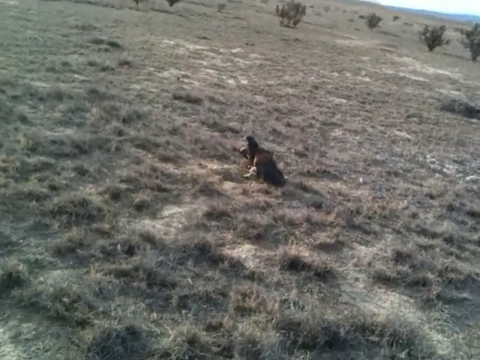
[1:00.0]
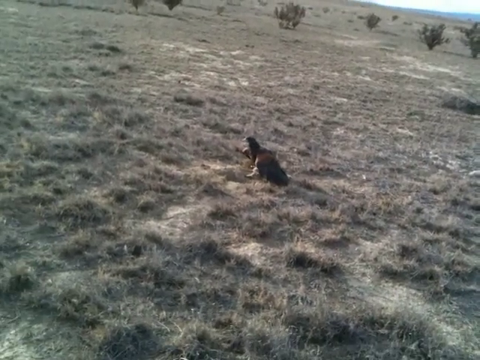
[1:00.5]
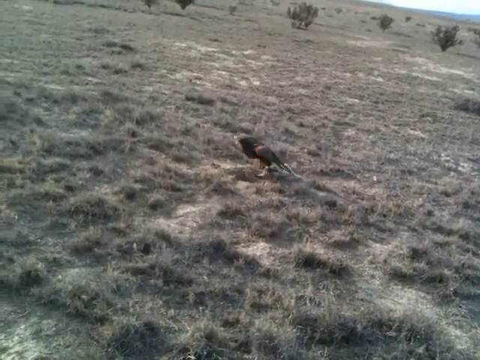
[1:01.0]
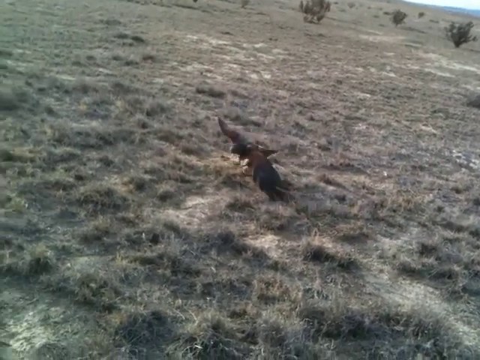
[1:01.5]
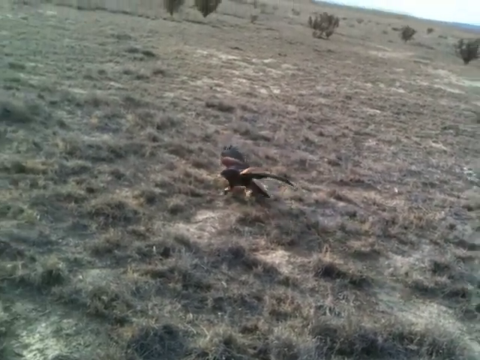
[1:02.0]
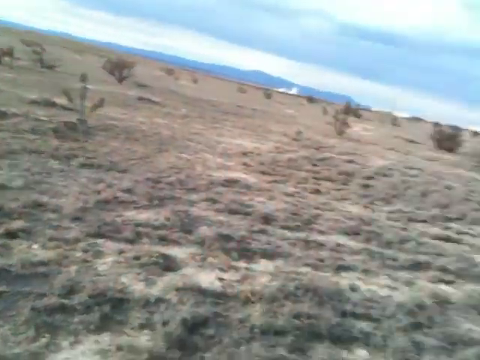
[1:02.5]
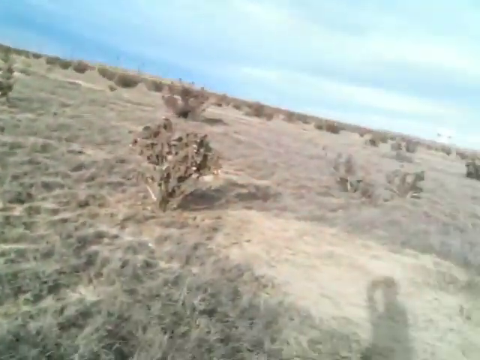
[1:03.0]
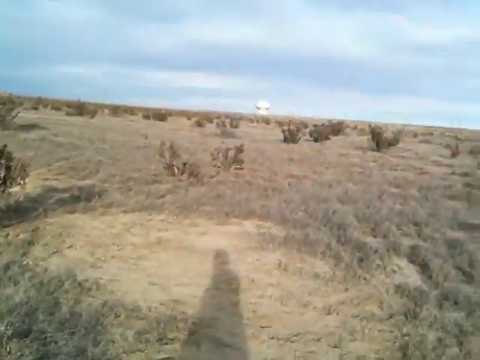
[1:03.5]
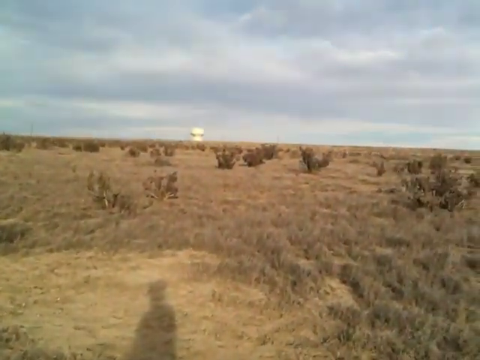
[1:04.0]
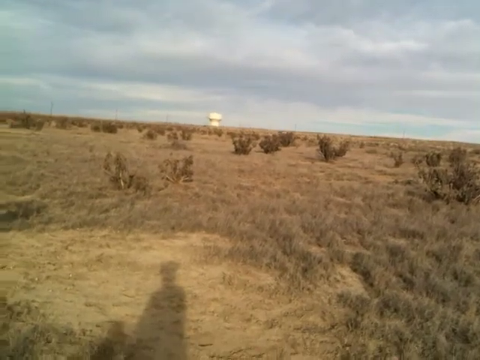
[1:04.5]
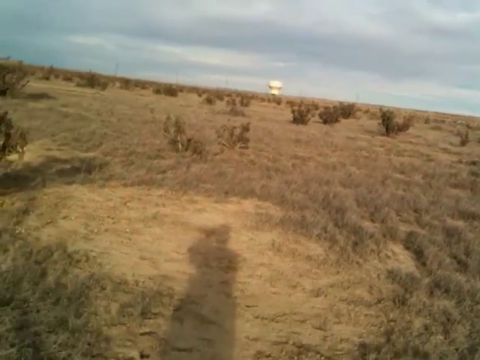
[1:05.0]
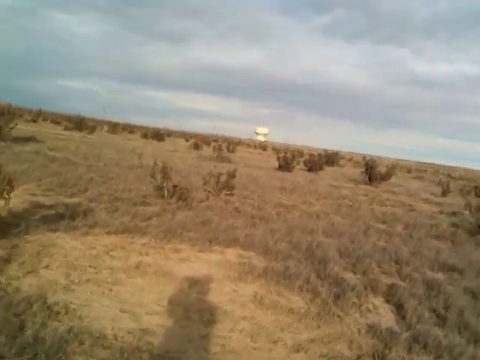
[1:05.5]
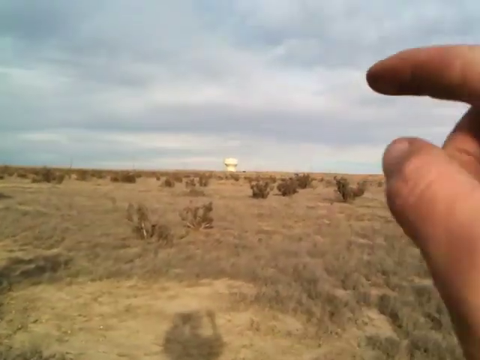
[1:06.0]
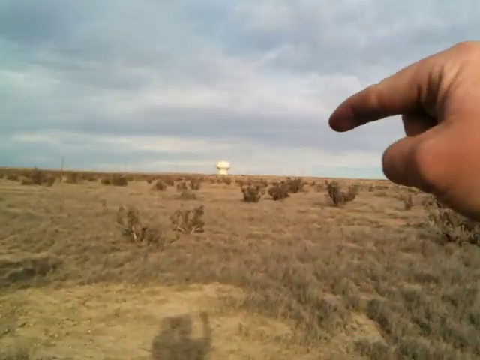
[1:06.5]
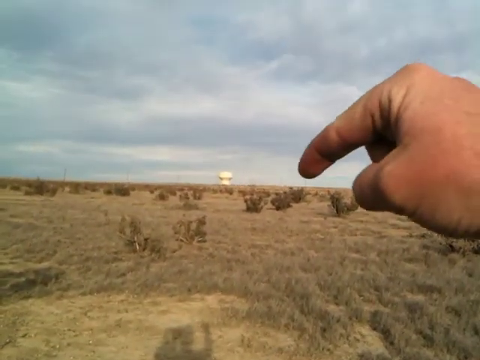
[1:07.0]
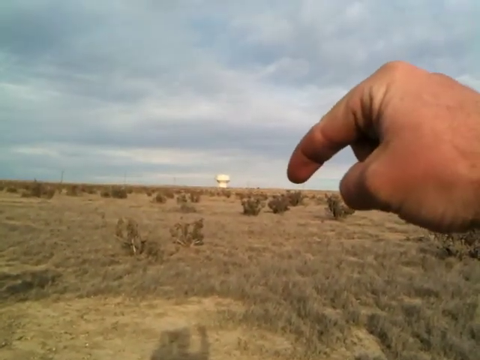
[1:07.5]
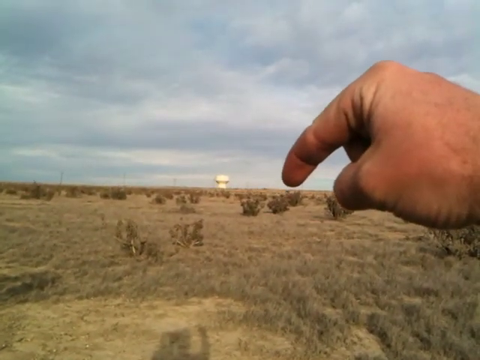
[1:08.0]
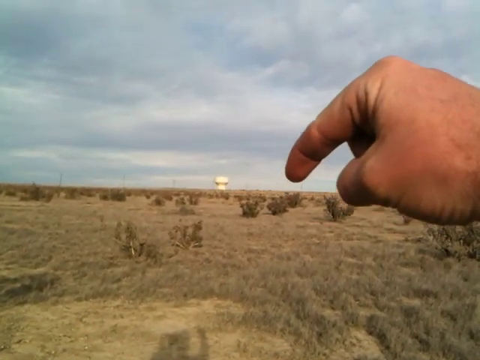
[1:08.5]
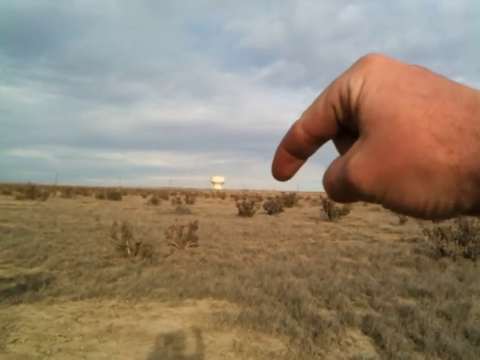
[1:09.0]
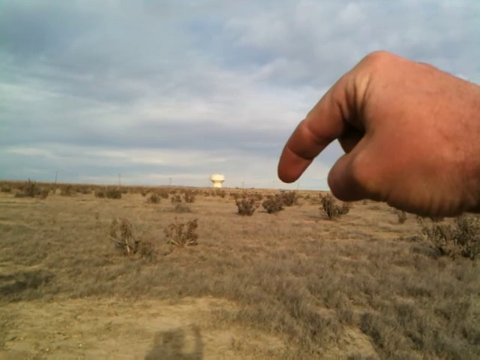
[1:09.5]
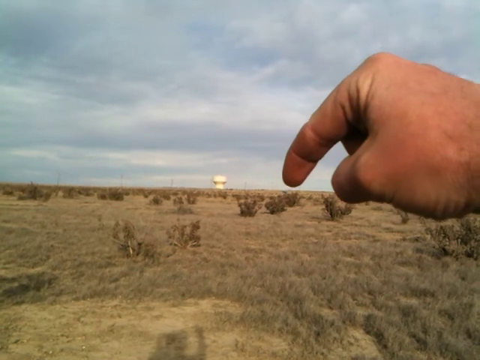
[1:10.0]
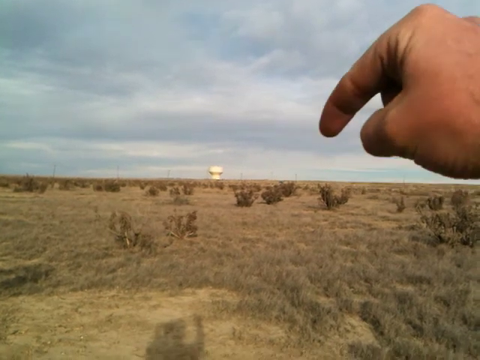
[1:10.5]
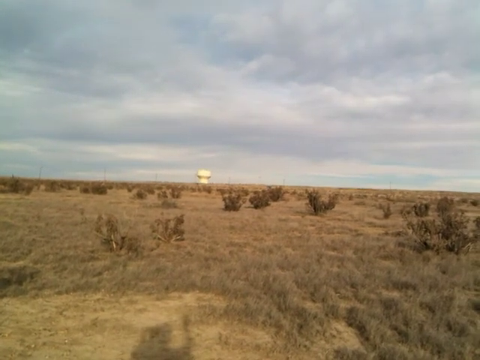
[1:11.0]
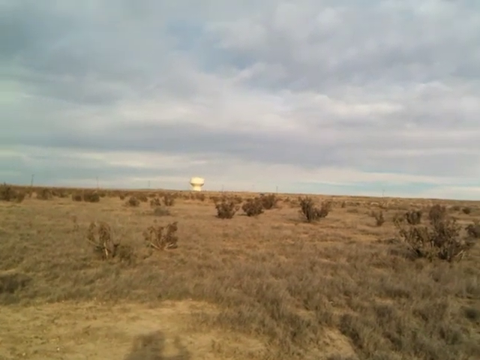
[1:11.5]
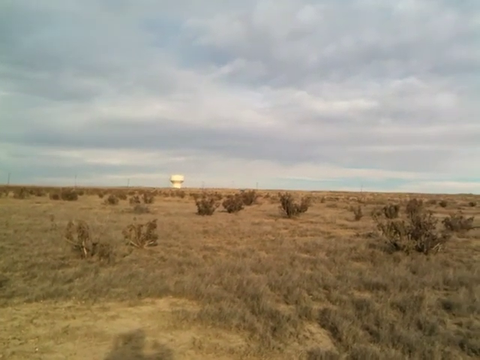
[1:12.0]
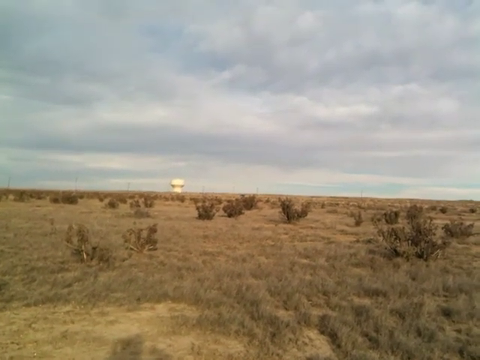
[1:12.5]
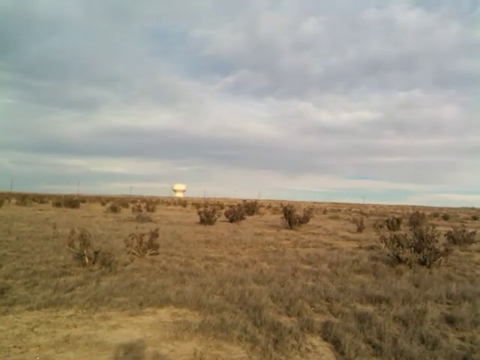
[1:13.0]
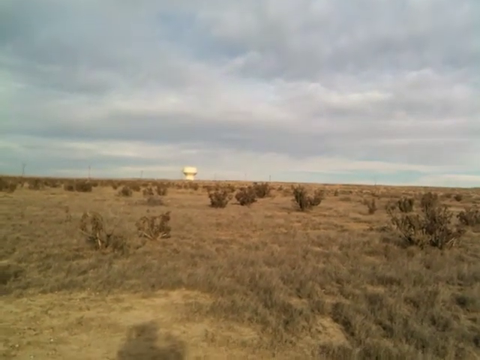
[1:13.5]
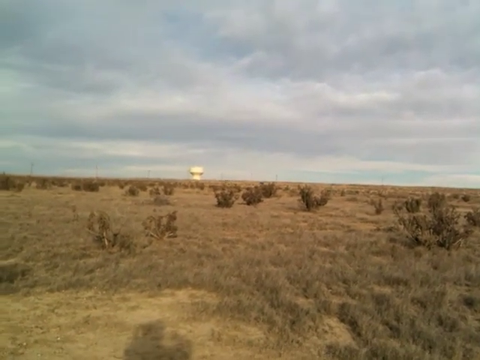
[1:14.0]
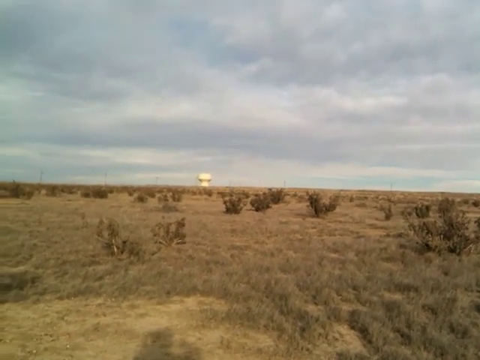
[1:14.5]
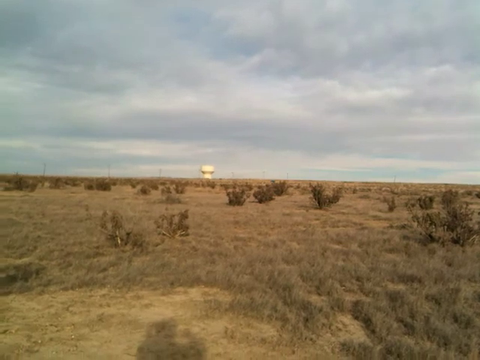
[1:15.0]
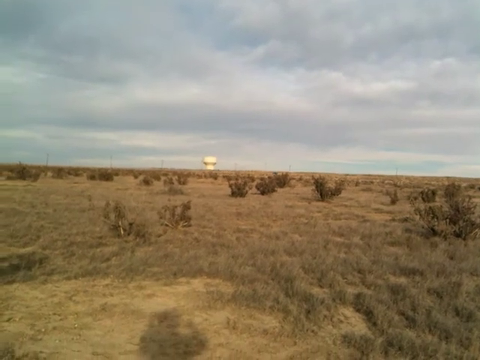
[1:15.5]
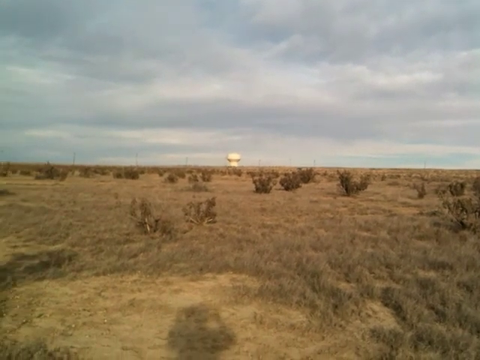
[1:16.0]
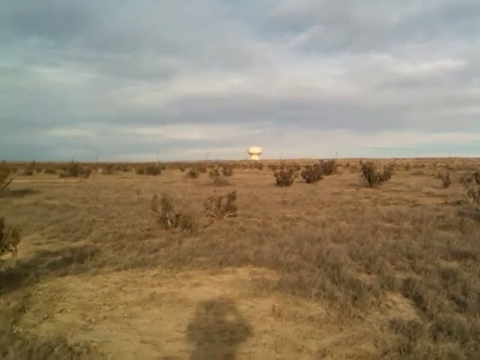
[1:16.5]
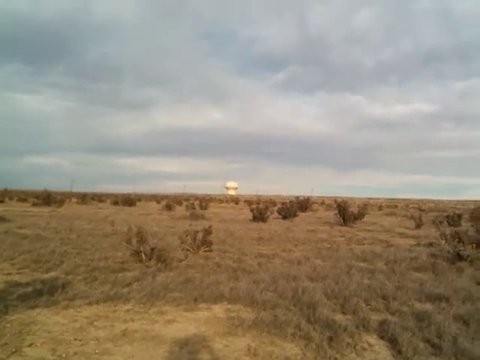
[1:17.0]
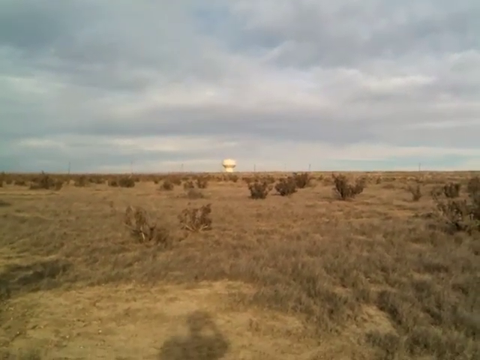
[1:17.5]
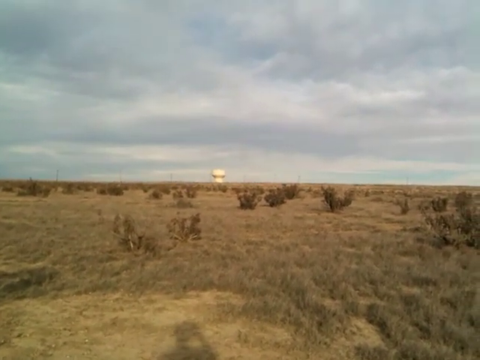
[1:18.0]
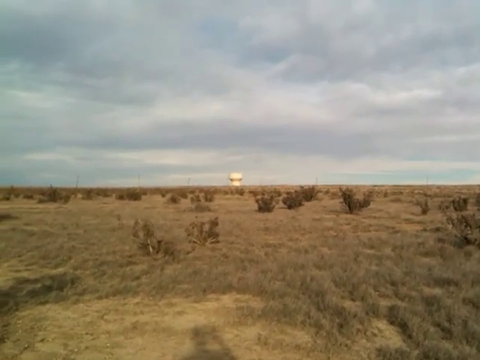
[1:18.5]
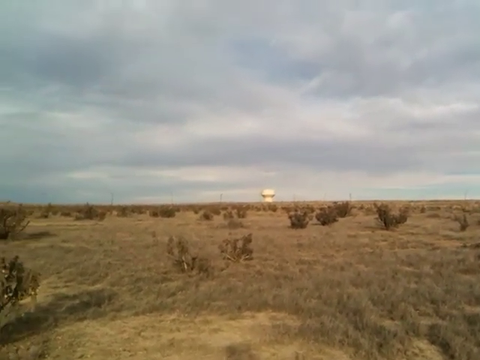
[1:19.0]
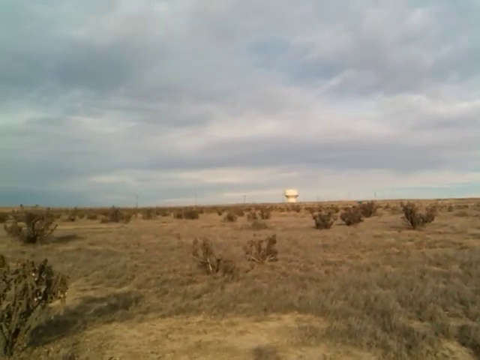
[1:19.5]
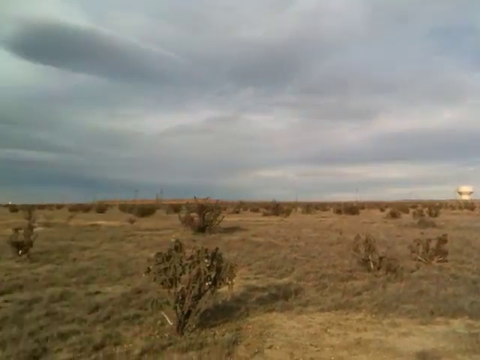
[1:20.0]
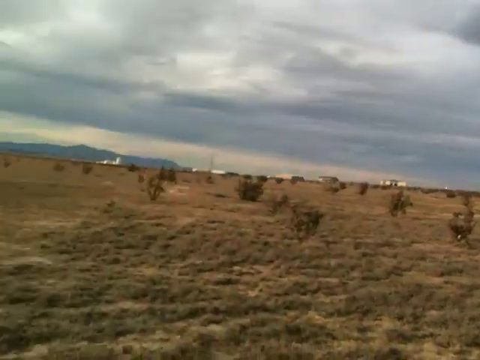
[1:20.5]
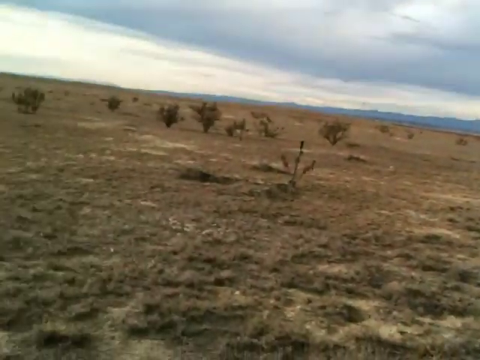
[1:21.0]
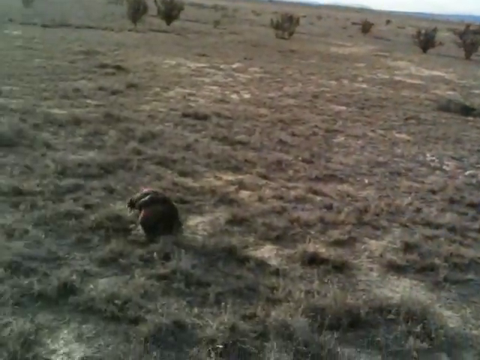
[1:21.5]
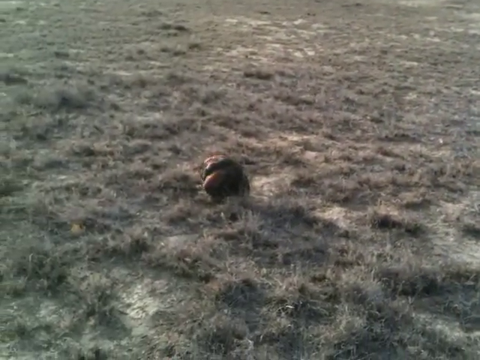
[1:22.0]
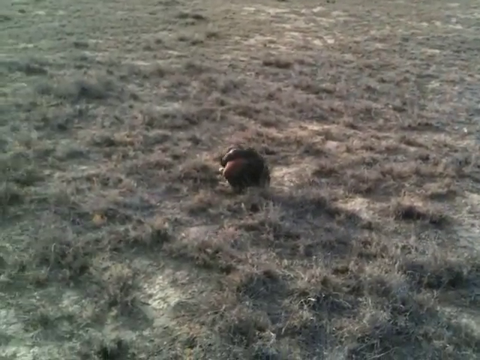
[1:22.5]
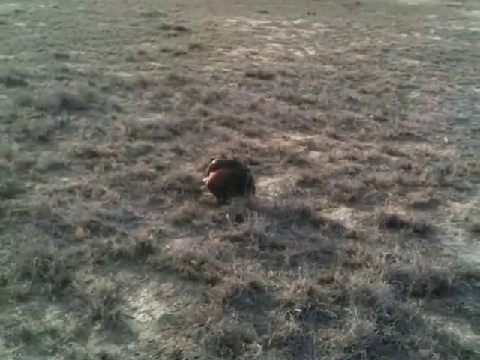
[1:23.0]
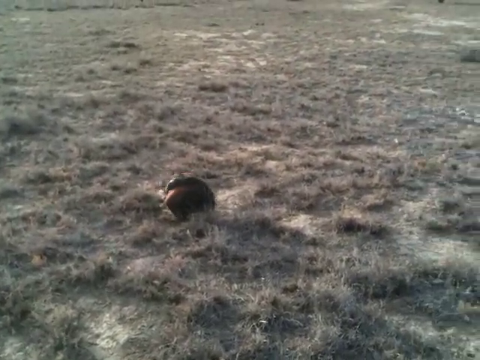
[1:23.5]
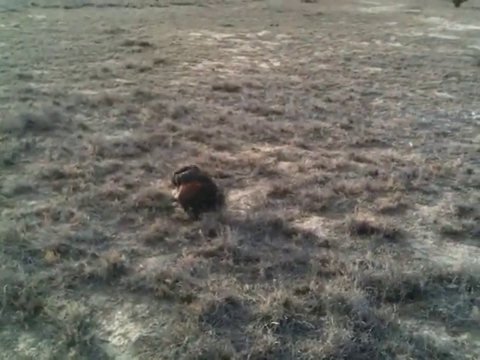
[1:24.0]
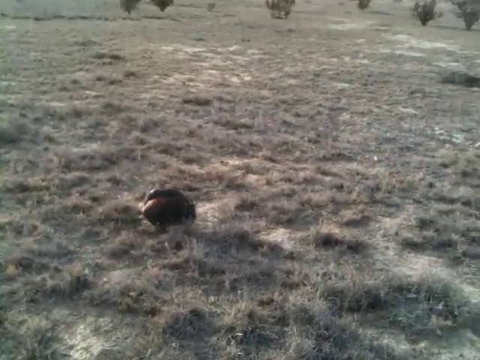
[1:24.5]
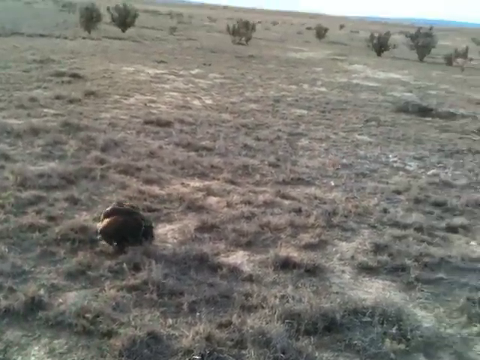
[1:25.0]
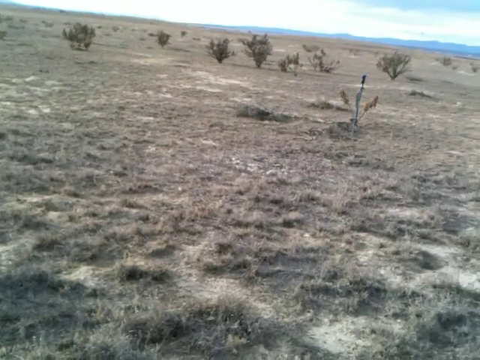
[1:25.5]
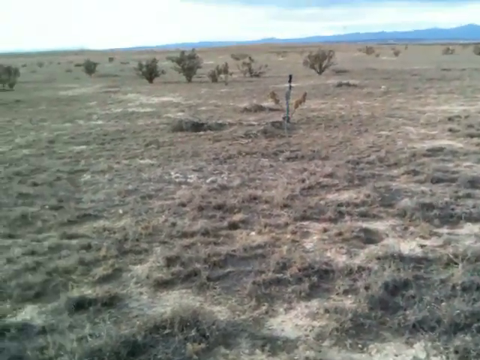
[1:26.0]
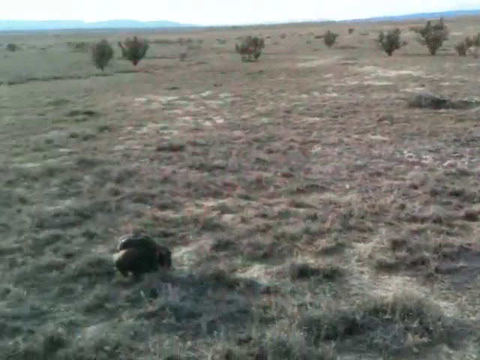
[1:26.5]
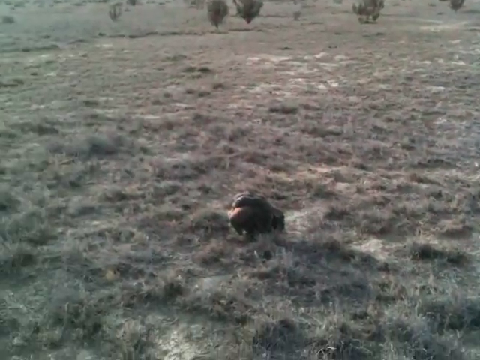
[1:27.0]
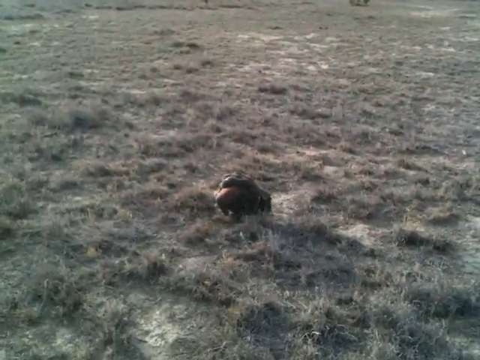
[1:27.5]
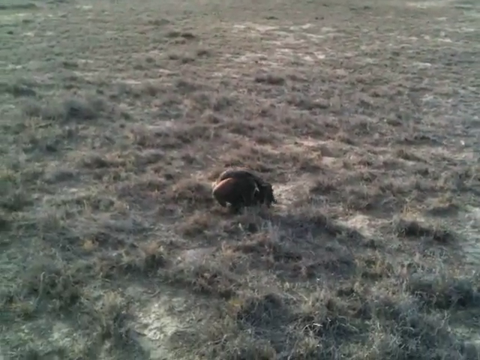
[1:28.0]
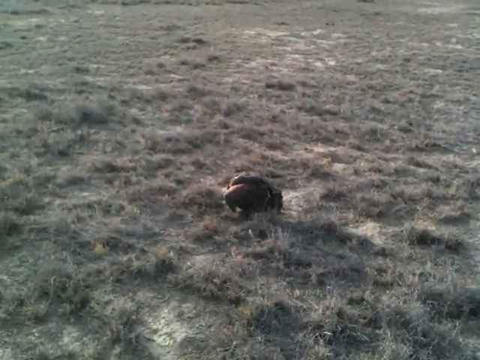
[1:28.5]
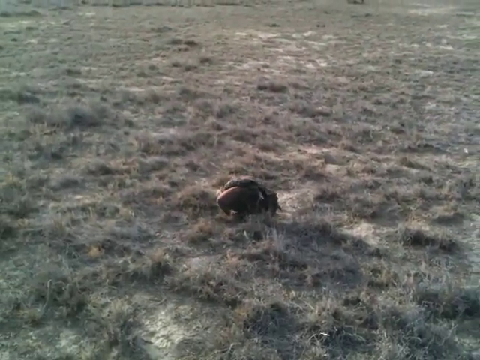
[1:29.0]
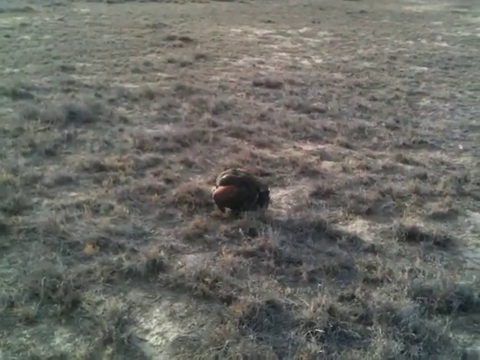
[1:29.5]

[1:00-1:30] The bird has just moved a little away from the man, who was coming closer to it. It stops to look to the sides, then starts moving again, holding the hare with its beak. The man moves the camera away from the bird to the other side, where his shadow can be seen along with some plants spaced a distance apart. Far off in the distance there is a white structure, and the sky is cloudy. The man looks like he switches the camera to his other hand and points downward with his right hand, though he seems to be pointing toward the white structure. The camera keeps shaking as he holds it. His shadow shows him putting the camera back into his right hand.